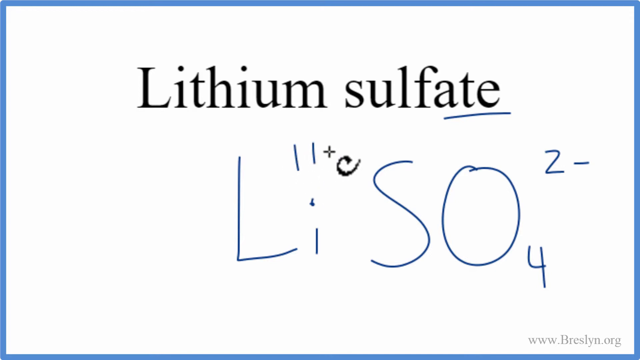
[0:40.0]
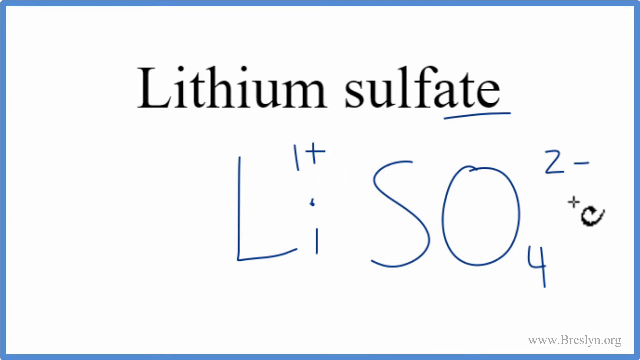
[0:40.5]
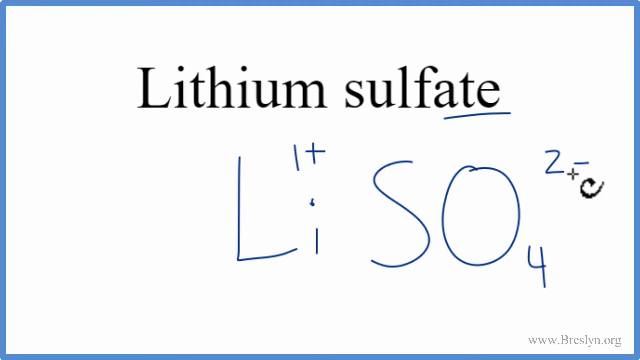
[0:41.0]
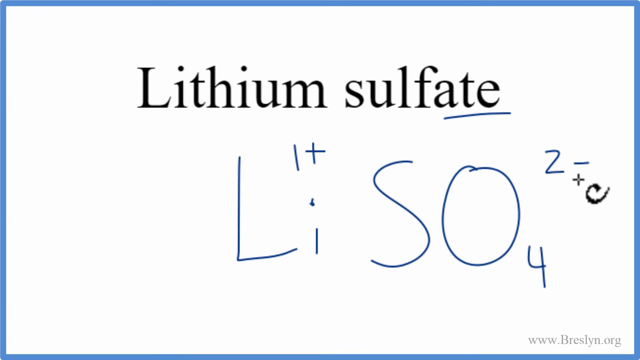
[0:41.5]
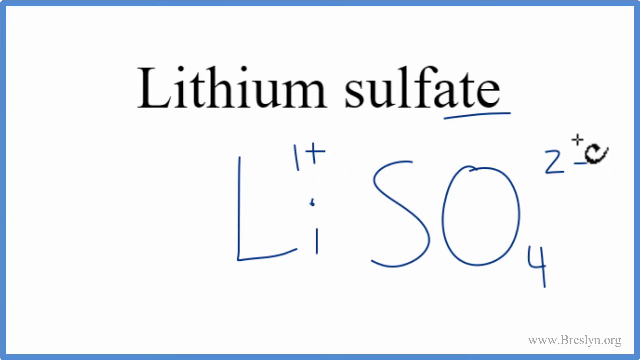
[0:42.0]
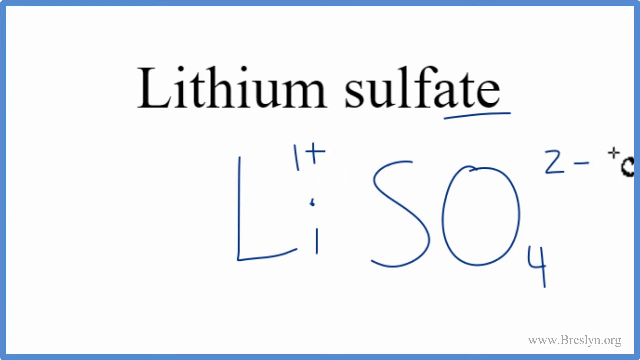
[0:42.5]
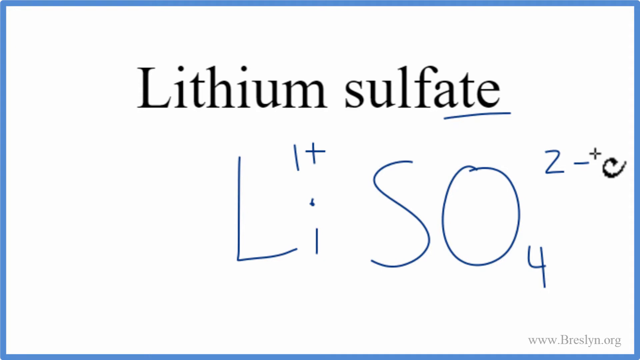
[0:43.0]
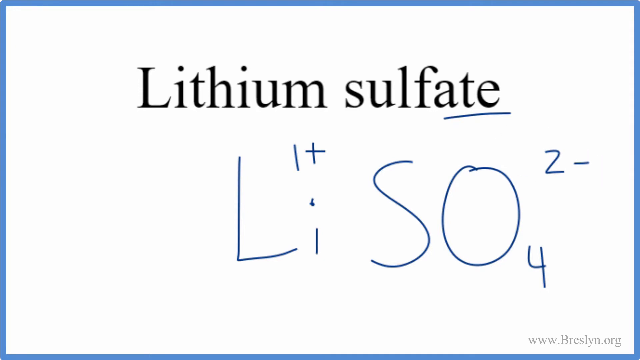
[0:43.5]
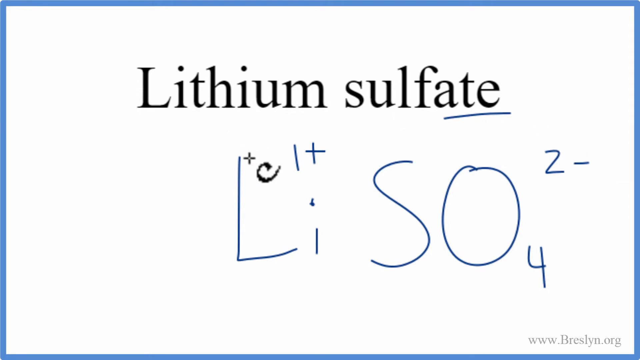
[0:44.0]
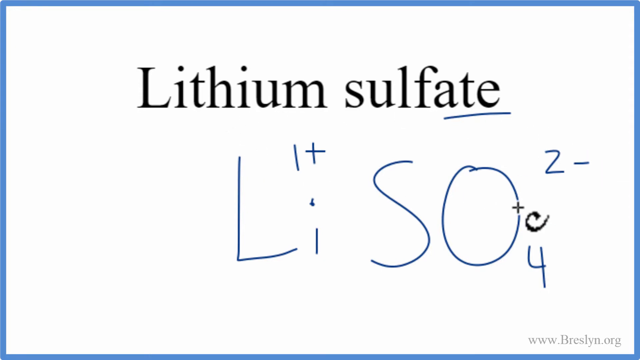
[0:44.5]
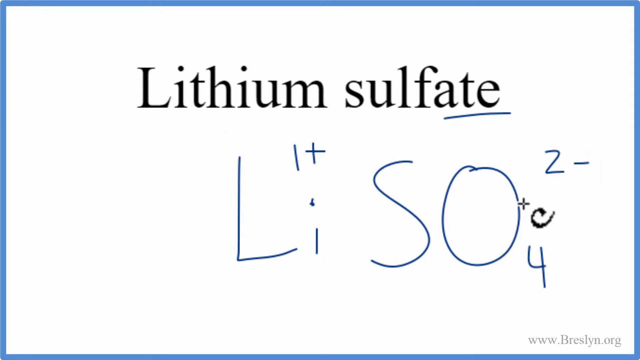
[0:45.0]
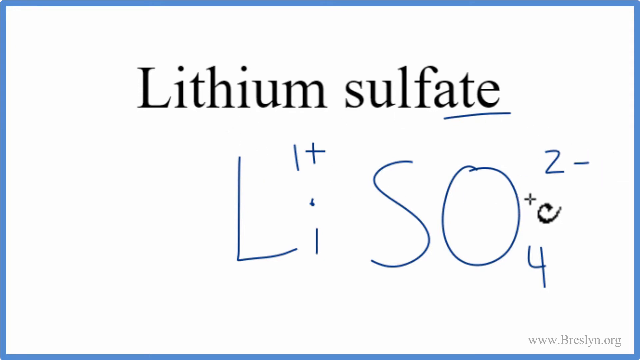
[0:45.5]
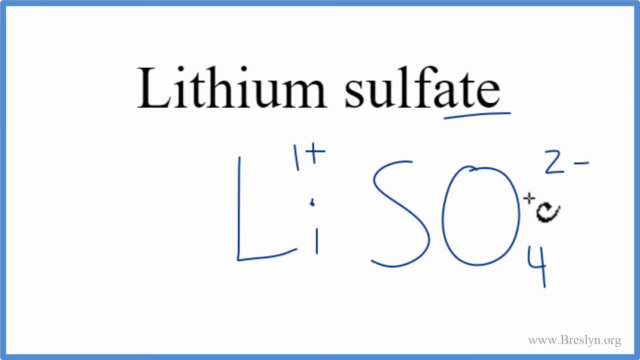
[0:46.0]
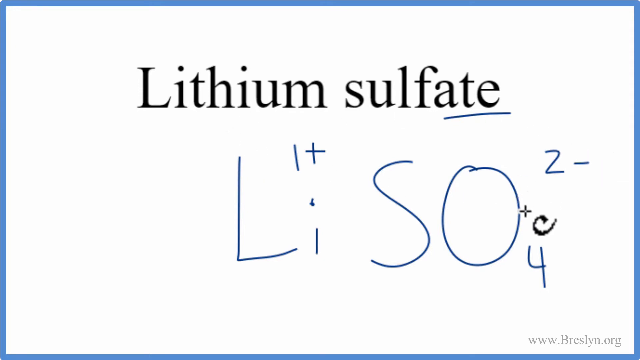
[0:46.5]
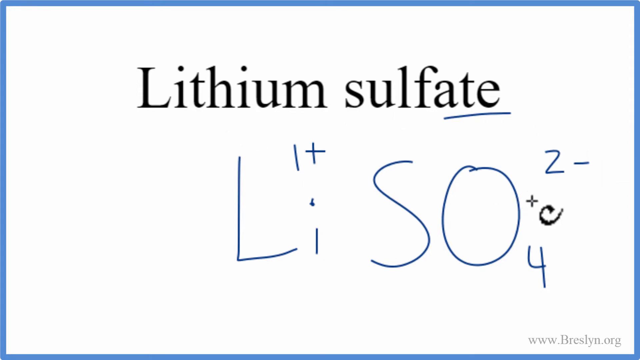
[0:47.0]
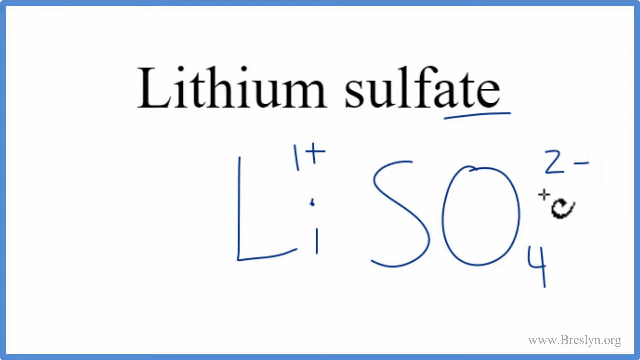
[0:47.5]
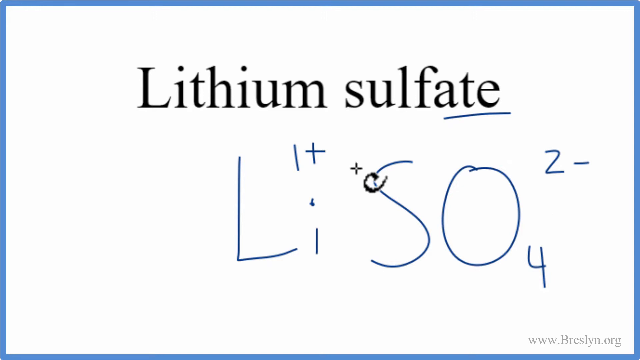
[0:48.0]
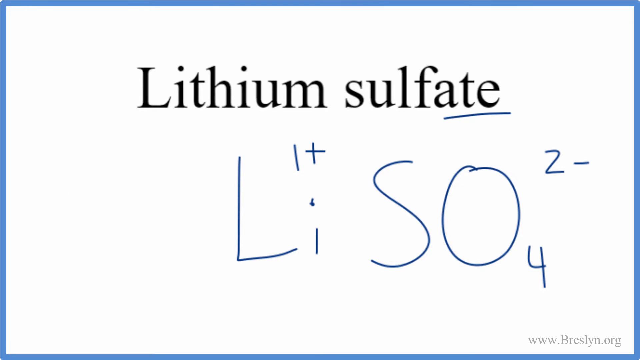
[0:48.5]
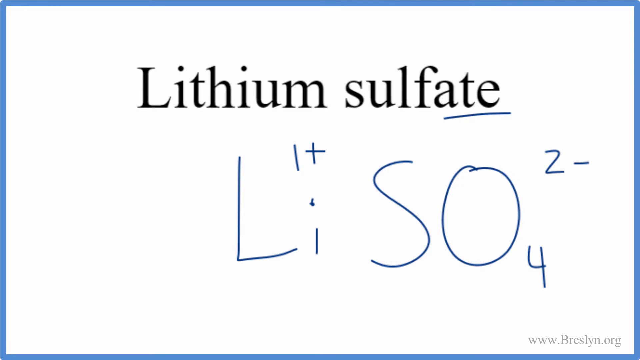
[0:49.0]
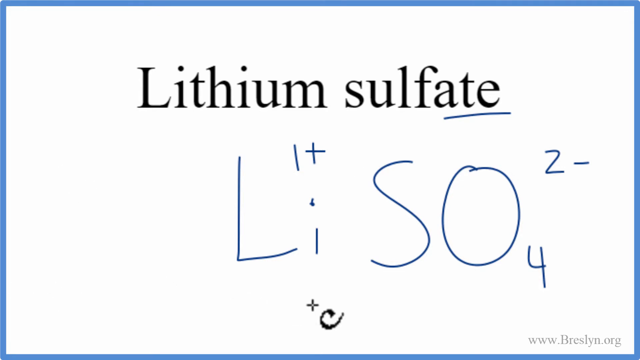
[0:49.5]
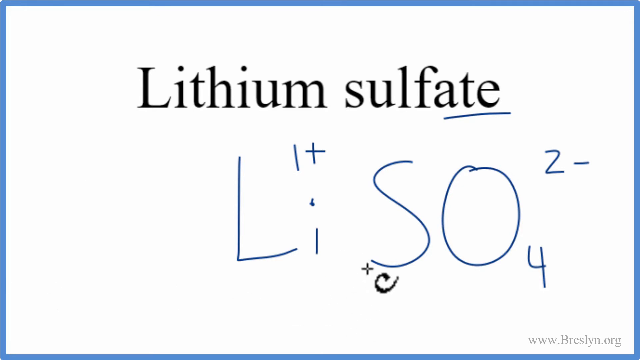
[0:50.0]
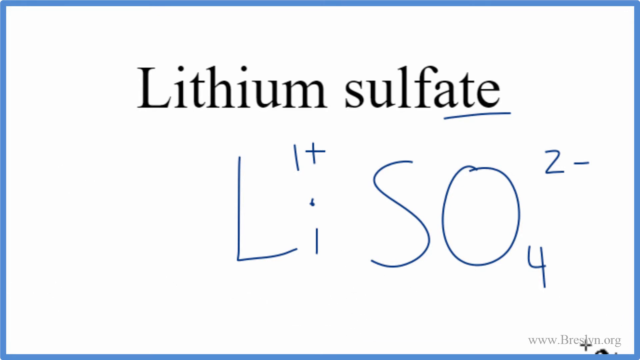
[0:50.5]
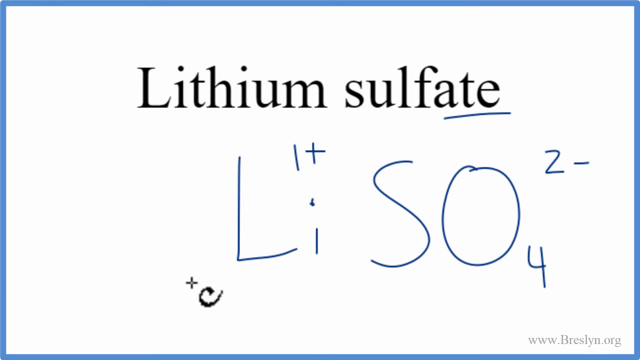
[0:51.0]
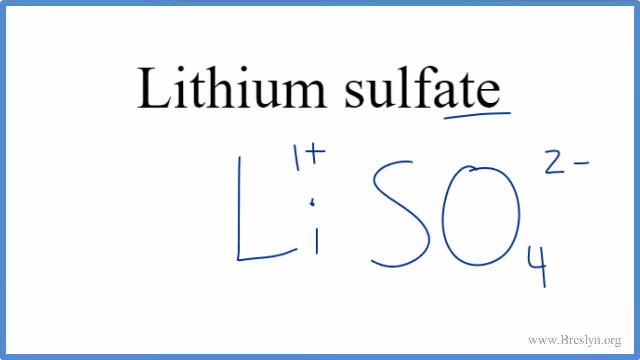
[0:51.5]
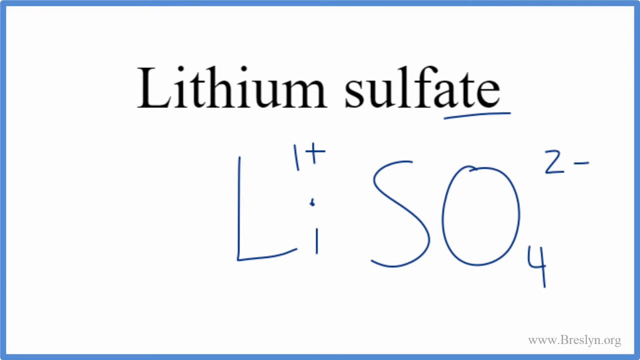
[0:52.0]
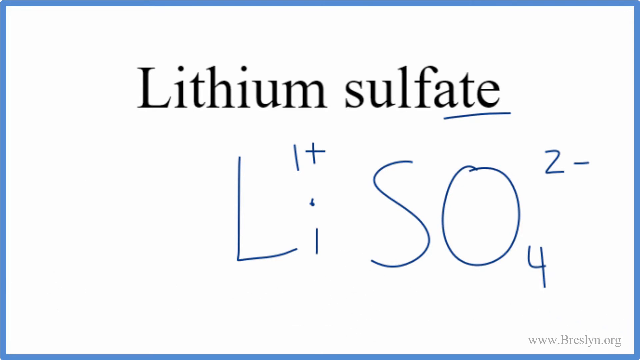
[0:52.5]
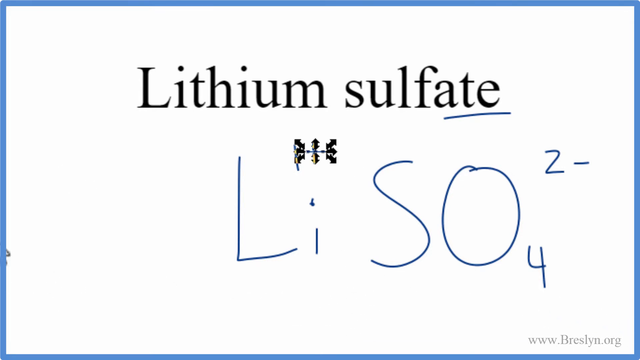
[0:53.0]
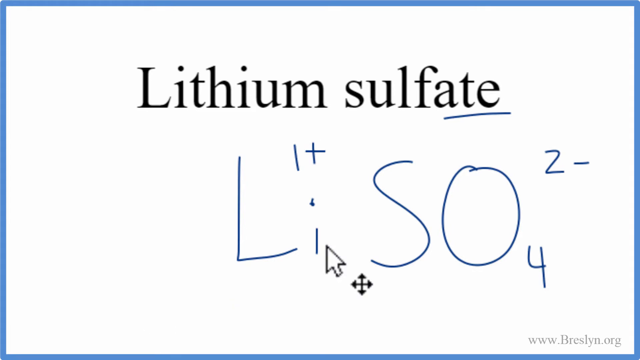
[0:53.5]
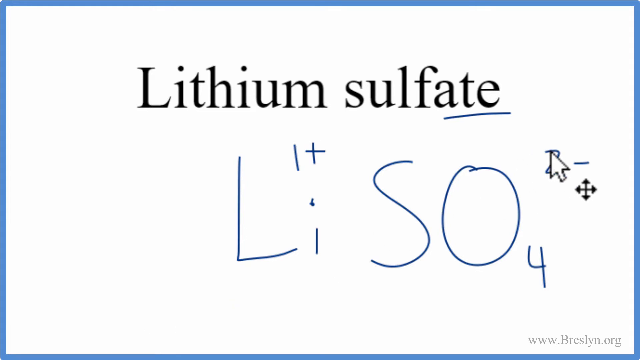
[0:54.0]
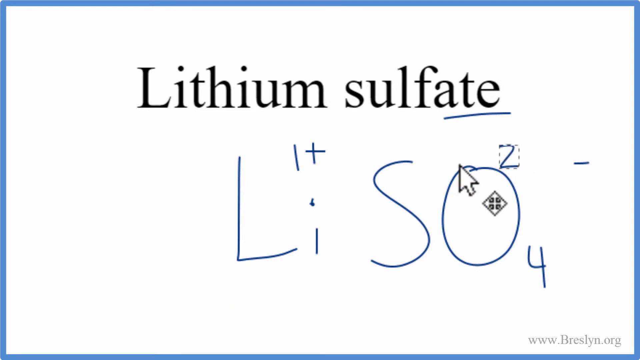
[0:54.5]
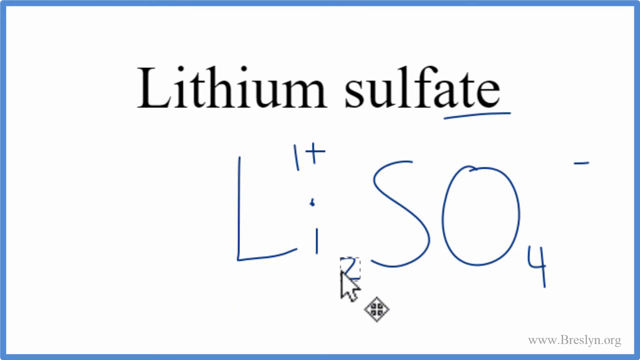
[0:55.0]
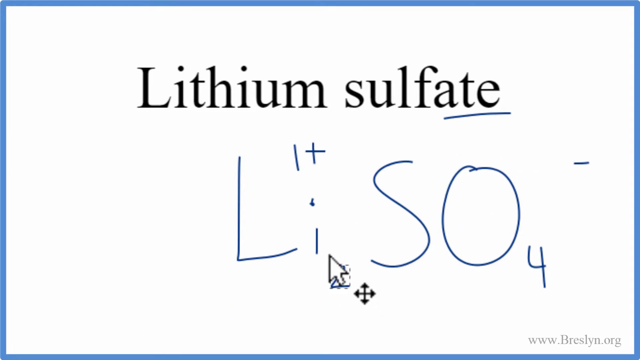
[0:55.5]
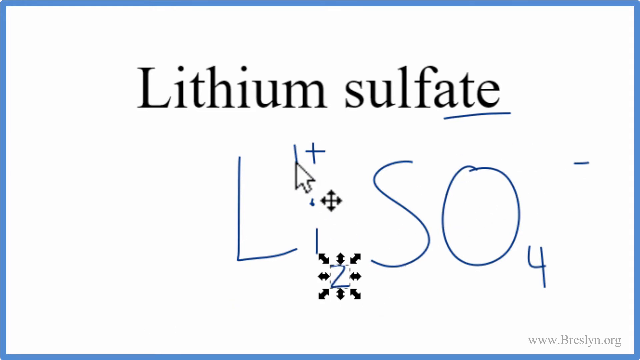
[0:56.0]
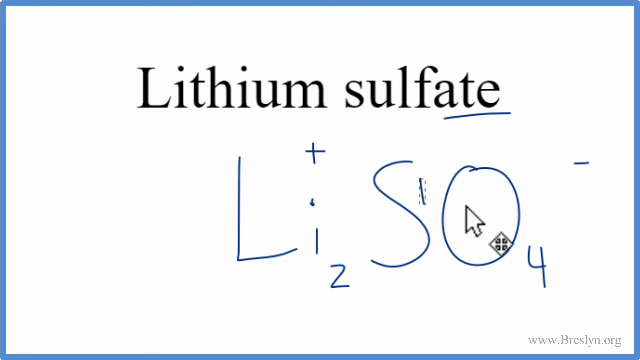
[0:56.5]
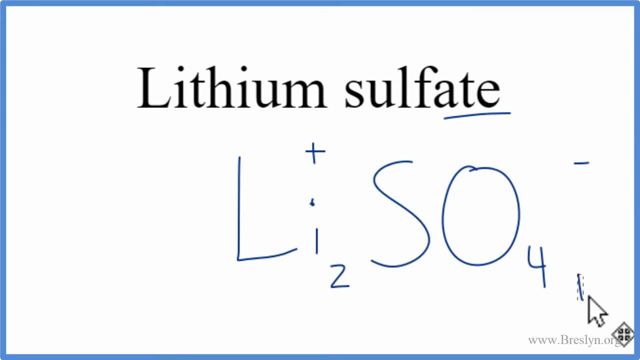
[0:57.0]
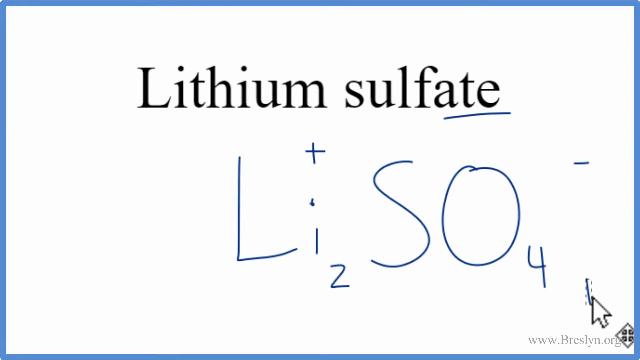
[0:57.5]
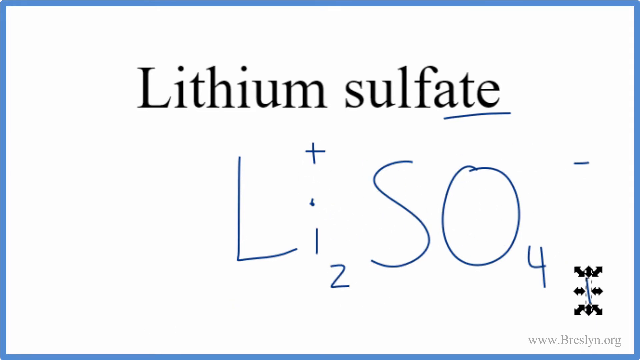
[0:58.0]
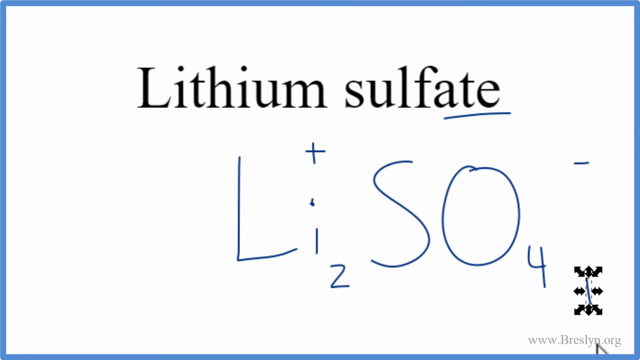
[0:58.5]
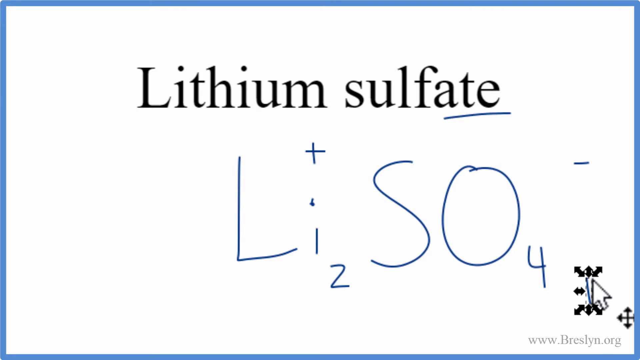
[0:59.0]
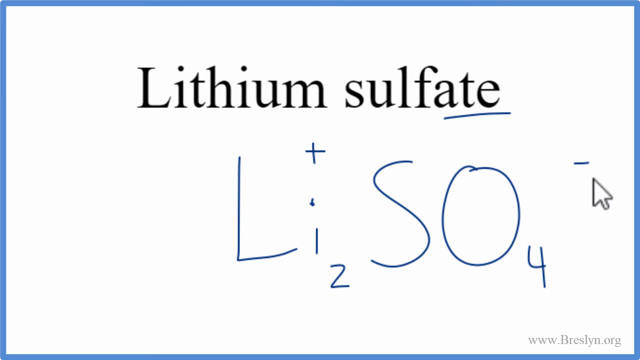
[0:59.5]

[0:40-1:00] The 1 plus is being written over the Li, and then the cursor circles the 2 minus, which is over the SO. The cursor changes into a mouse pointer, and the numbers in the top right corners are dragged to the bottom: the 2 is dragged to the bottom of the Li, and the 1 is dragged to the bottom of the SO4, so the numbers appear to be swapped and moved to the bottom of the other element.